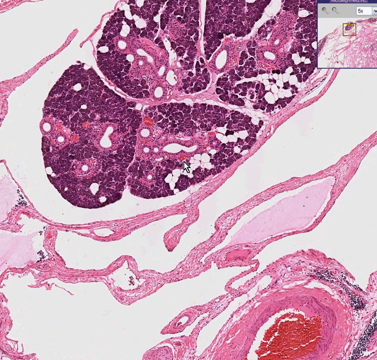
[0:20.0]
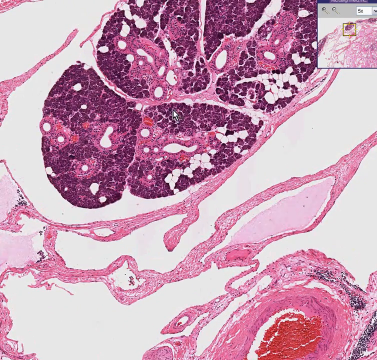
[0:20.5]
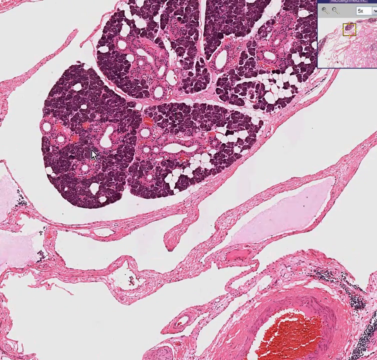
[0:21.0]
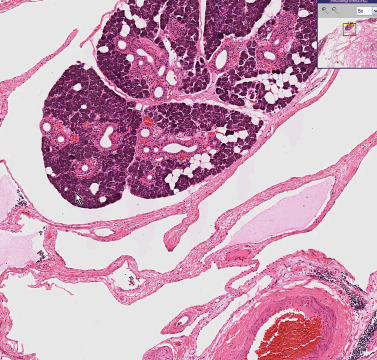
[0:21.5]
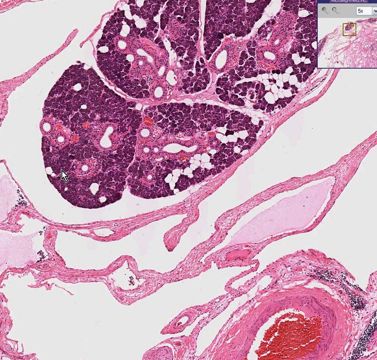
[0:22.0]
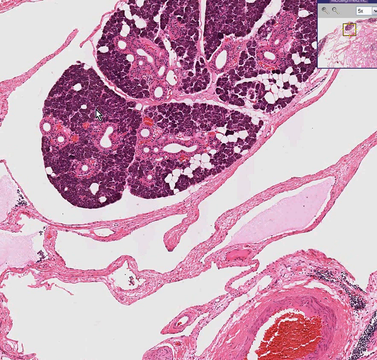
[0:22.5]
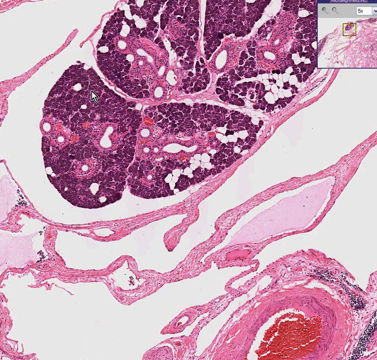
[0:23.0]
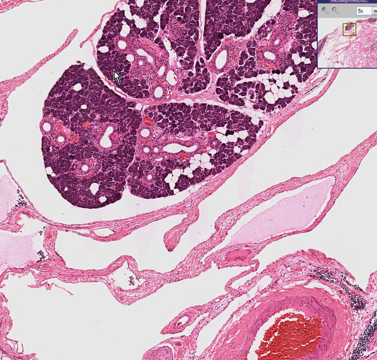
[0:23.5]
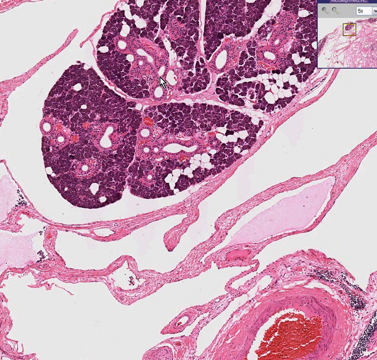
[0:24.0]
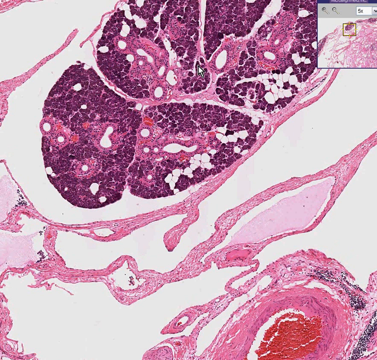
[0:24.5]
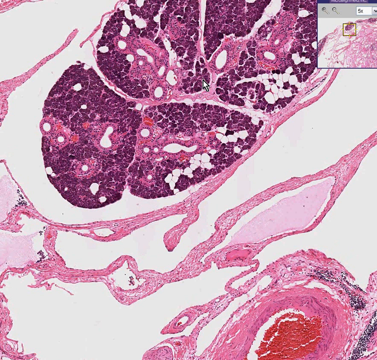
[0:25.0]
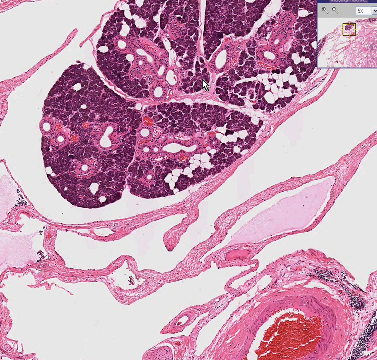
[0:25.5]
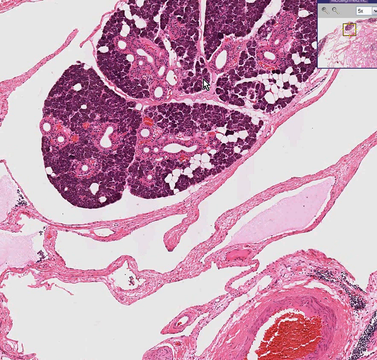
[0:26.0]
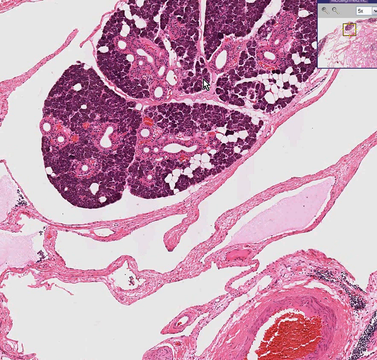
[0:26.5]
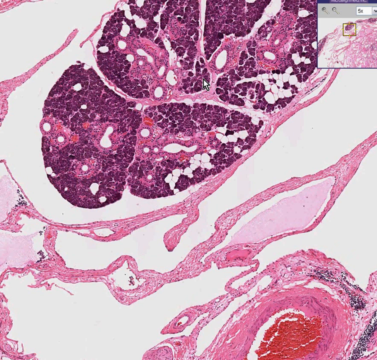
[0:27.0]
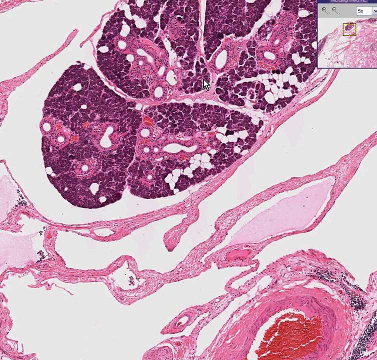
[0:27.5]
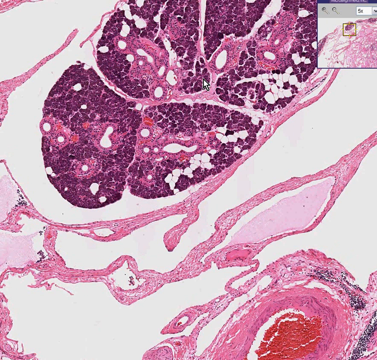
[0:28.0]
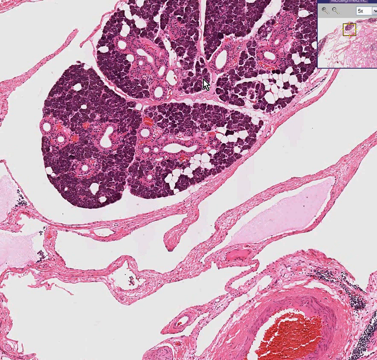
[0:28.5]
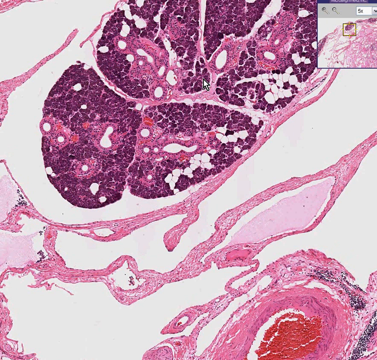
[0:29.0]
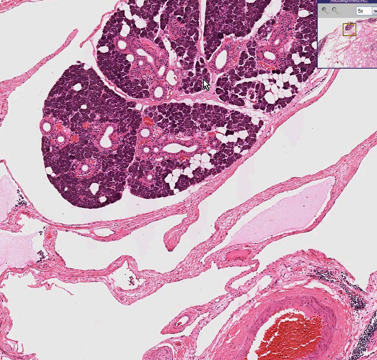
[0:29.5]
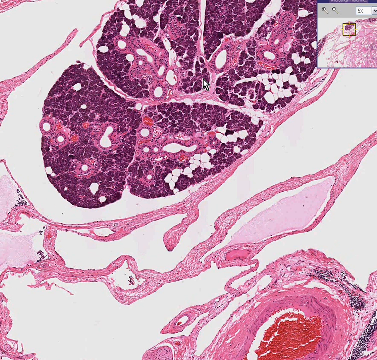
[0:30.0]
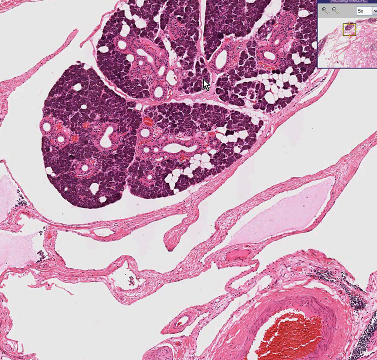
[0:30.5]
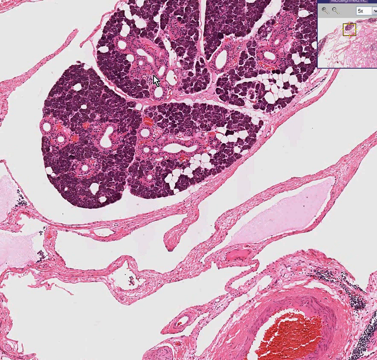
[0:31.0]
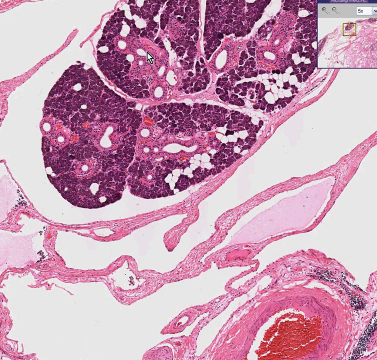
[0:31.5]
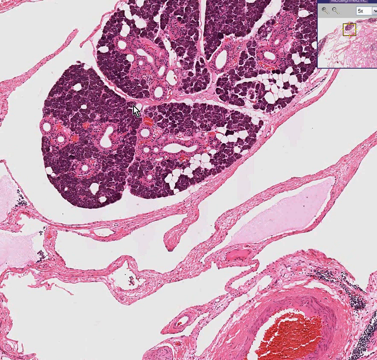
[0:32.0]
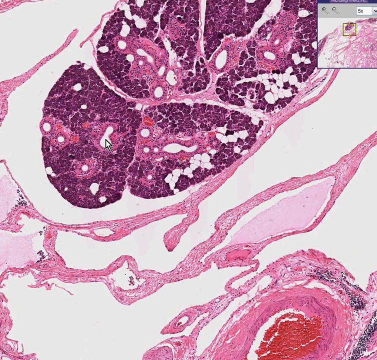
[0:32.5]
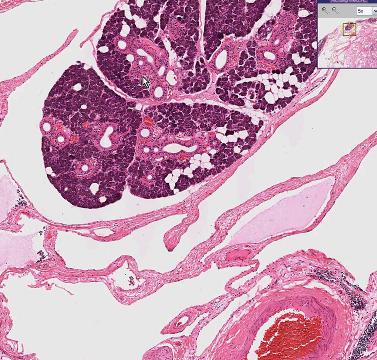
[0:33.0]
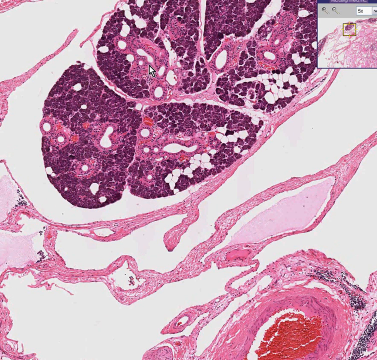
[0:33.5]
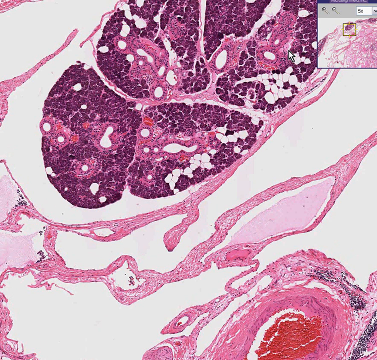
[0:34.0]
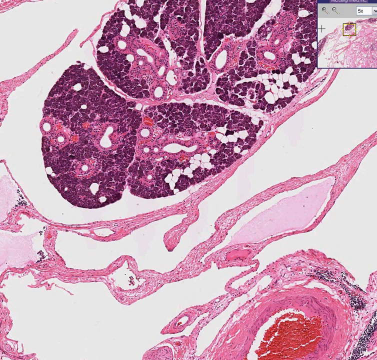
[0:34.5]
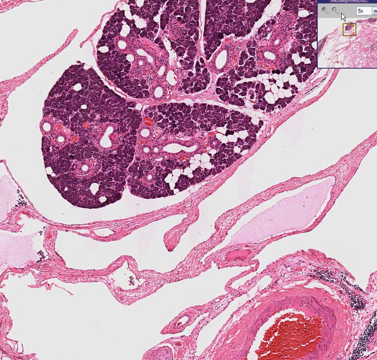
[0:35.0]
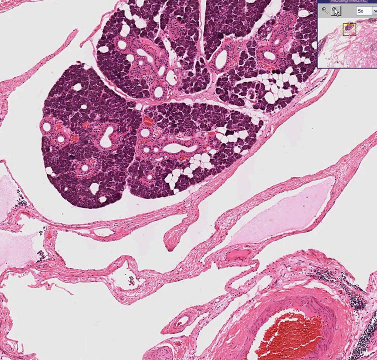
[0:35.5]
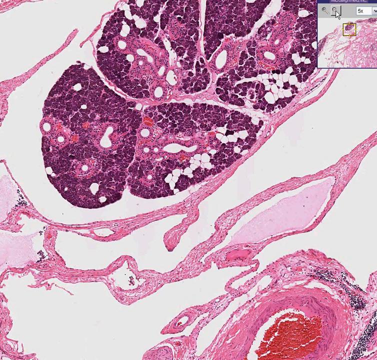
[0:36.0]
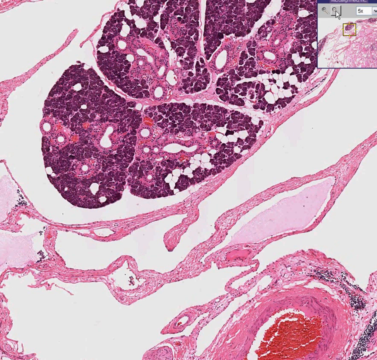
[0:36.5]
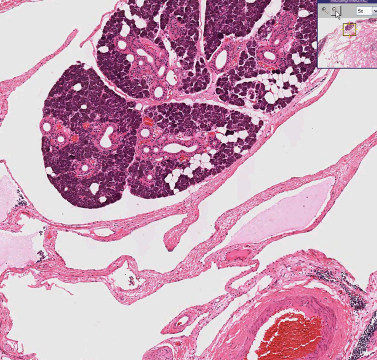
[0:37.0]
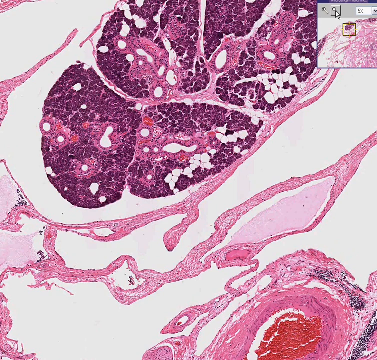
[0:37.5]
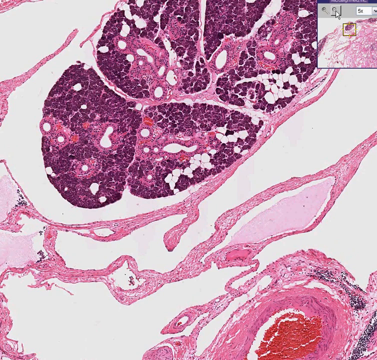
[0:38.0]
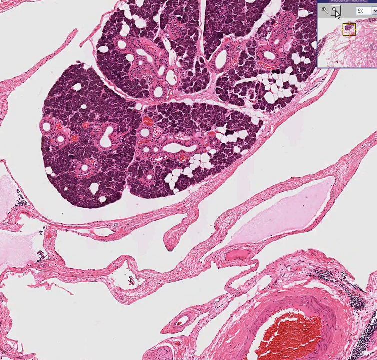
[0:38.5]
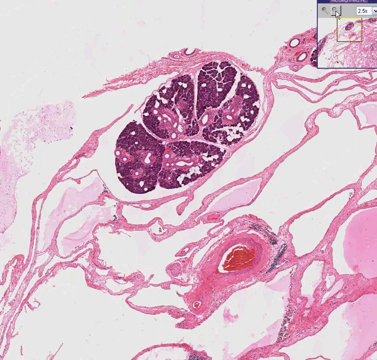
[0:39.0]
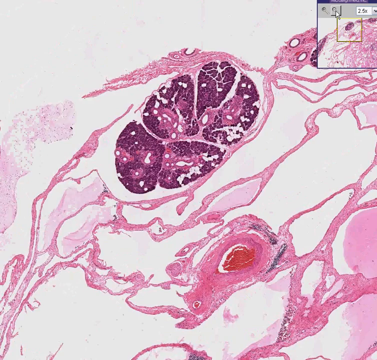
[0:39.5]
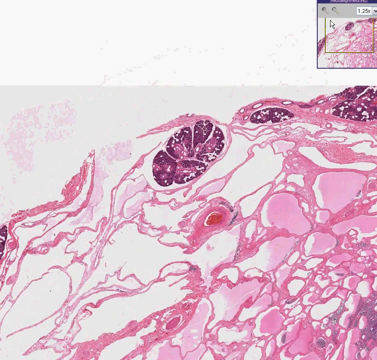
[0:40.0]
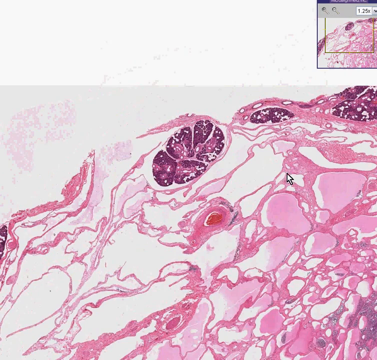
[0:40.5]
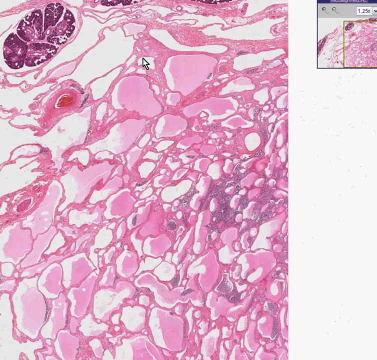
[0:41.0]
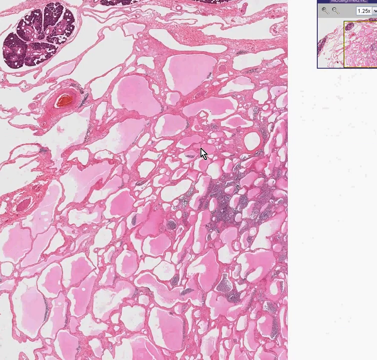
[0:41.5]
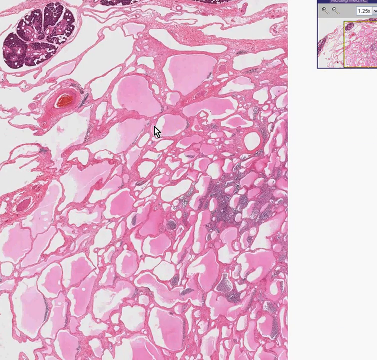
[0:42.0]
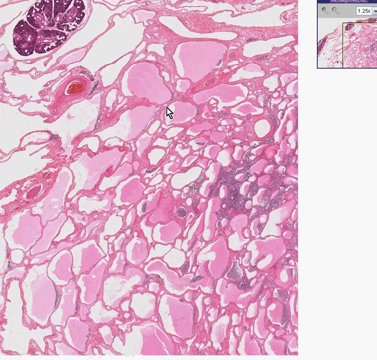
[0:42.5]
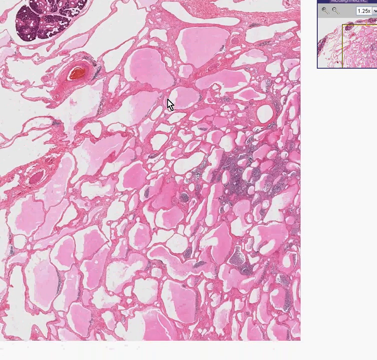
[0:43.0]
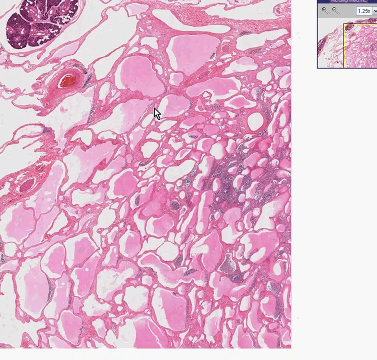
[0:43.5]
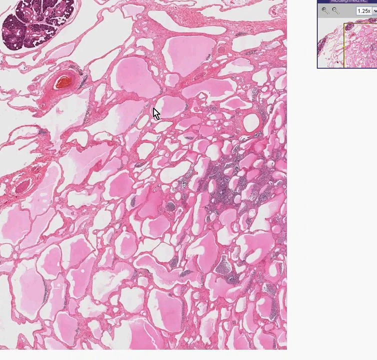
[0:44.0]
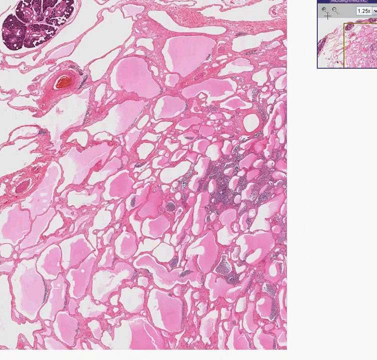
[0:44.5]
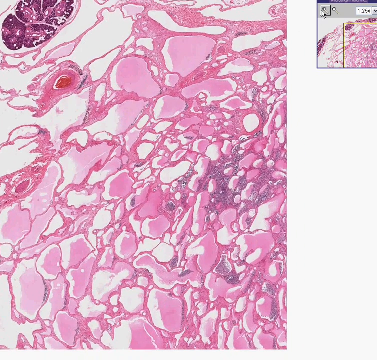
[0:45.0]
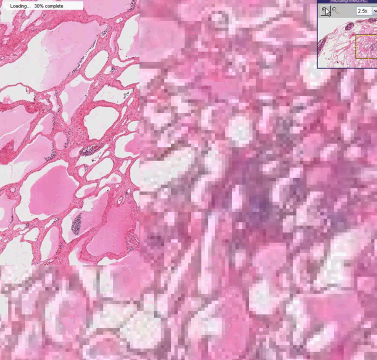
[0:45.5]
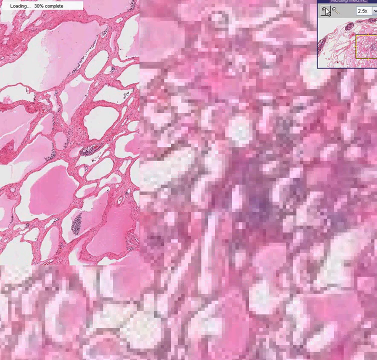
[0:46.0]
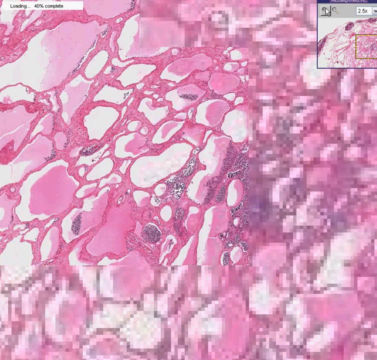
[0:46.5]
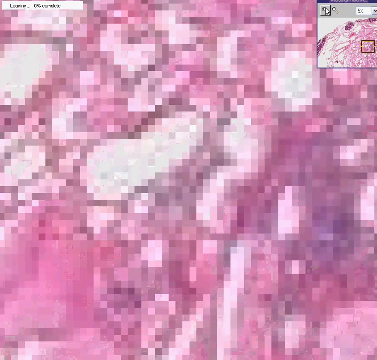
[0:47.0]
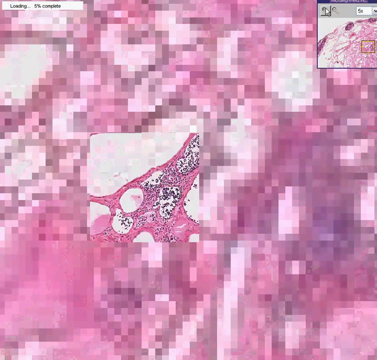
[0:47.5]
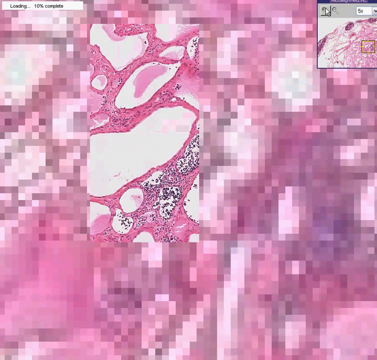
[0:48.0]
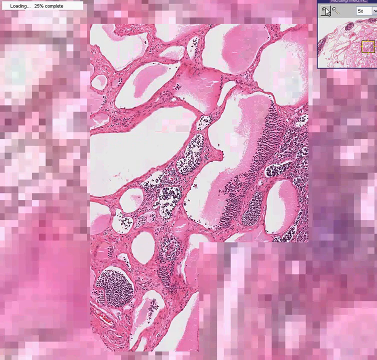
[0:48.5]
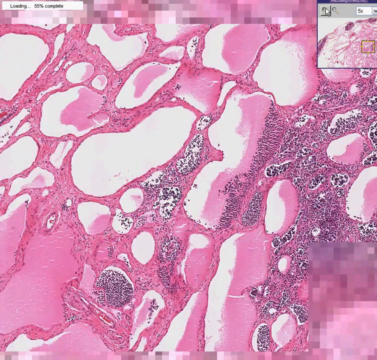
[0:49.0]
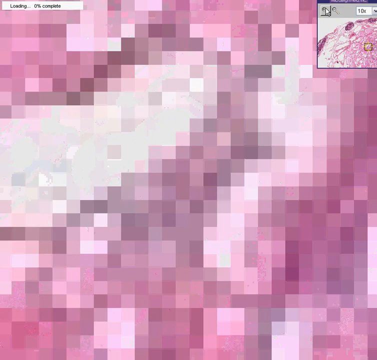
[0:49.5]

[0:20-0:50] The same digital image appears, looking a little more zoomed in, as the user moves the mouse around. The zoomed-in area has a darker shade, though most of the image is white and pink. It is a series of wavy lines that sometimes vaguely form circles, looking like something at a cellular or molecular level, or maybe a close-up image of blood cells. The mouse pointer rests over a darker part, almost dark purple, then moves around, pointing at different parts of the image. The user goes back to the zoom screen and zooms in on another part of the image, then zooms in more; as it zooms, the image renders from pixelated to clearer.